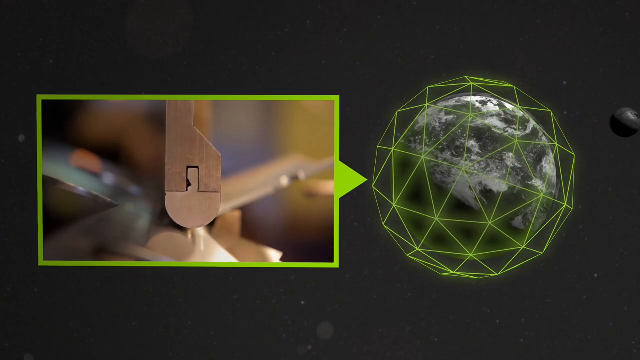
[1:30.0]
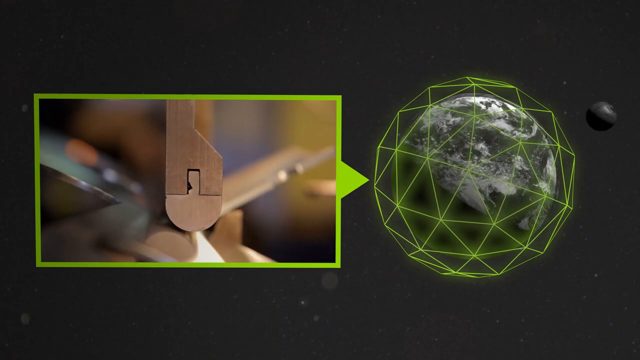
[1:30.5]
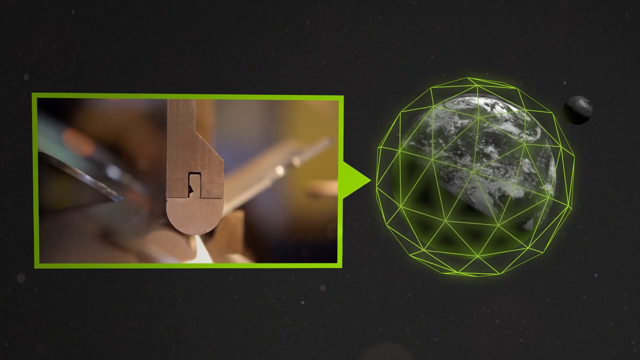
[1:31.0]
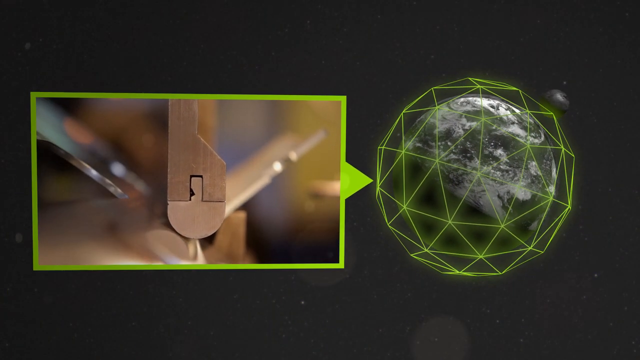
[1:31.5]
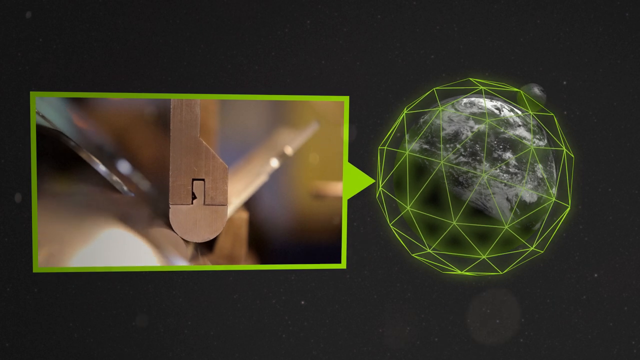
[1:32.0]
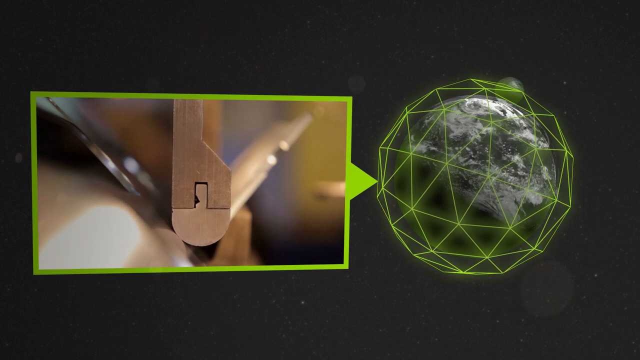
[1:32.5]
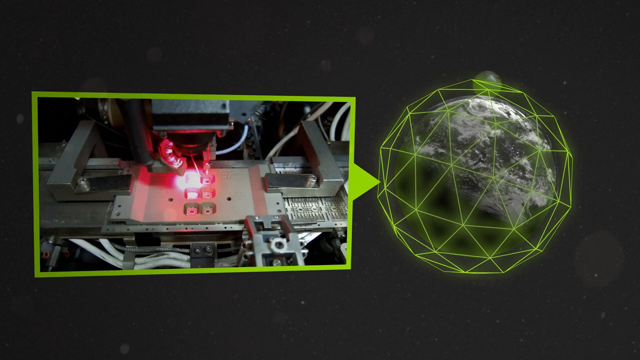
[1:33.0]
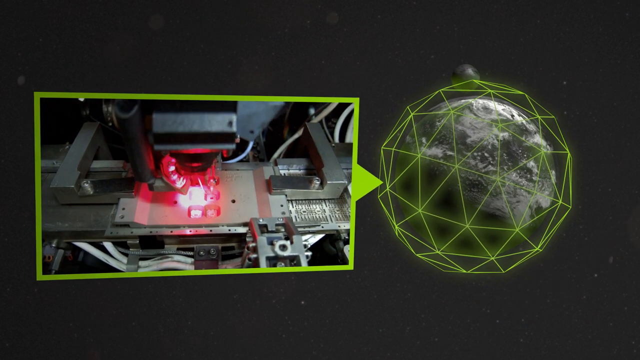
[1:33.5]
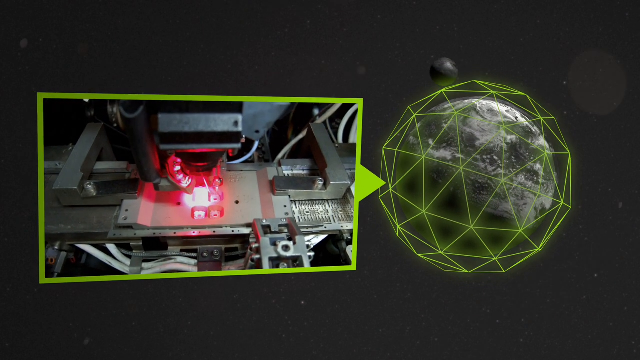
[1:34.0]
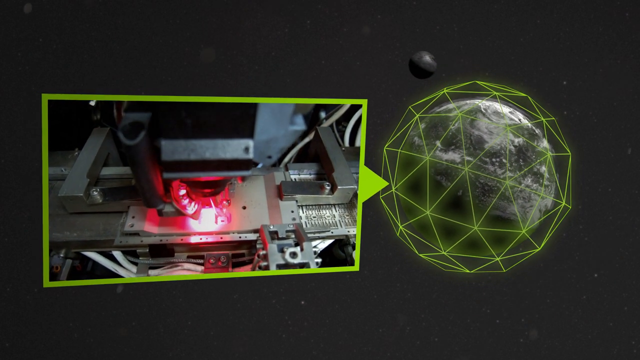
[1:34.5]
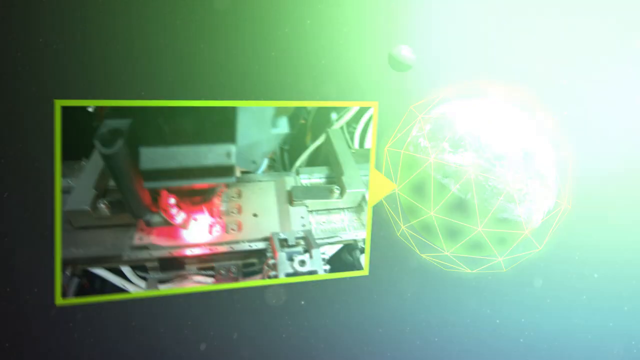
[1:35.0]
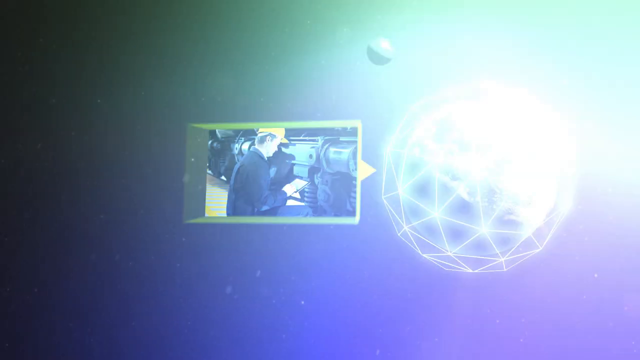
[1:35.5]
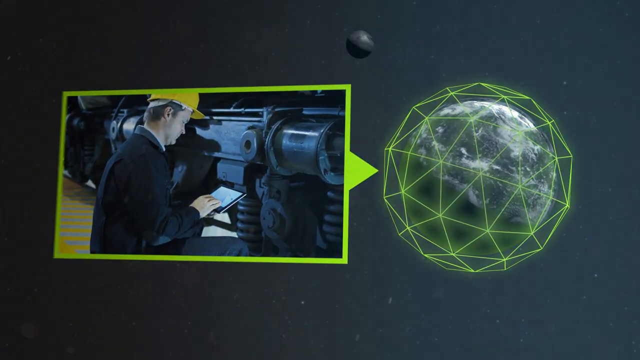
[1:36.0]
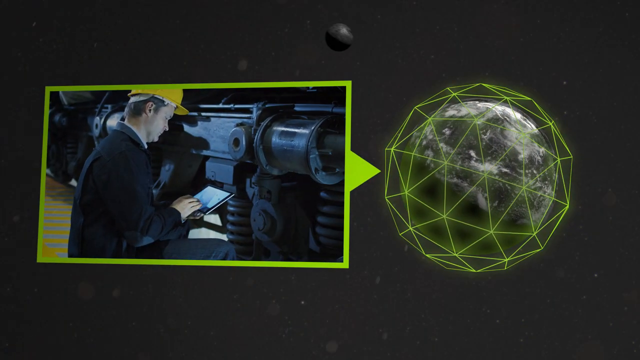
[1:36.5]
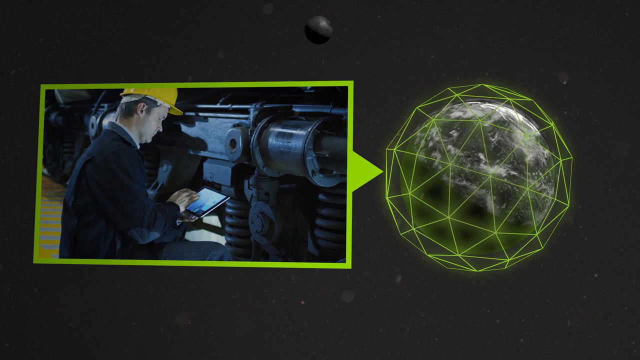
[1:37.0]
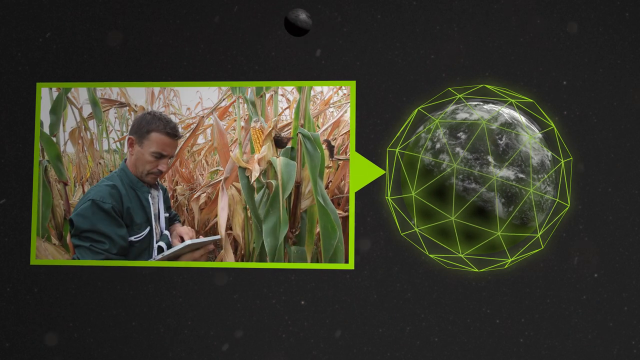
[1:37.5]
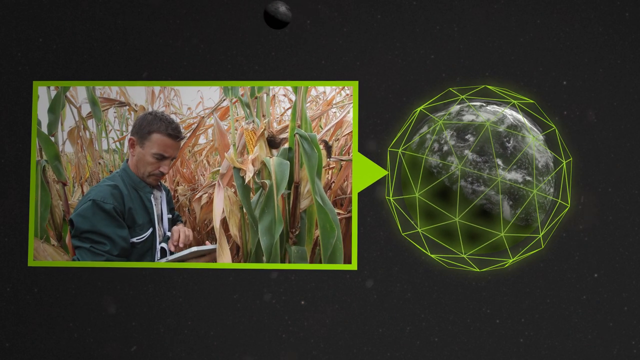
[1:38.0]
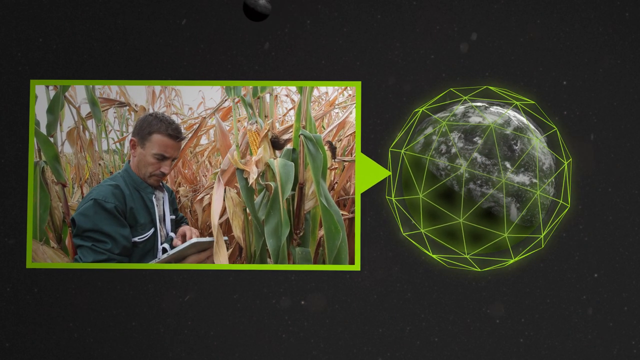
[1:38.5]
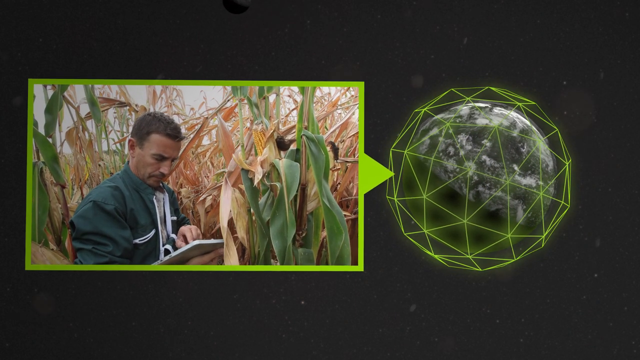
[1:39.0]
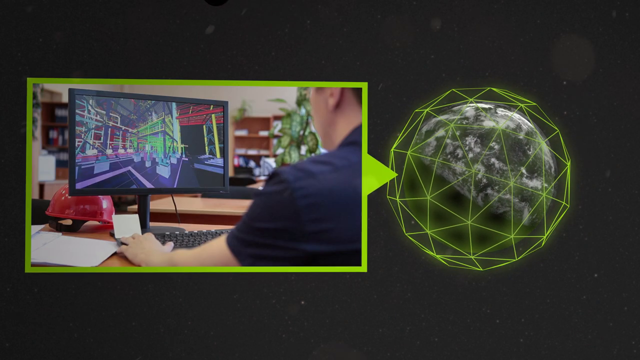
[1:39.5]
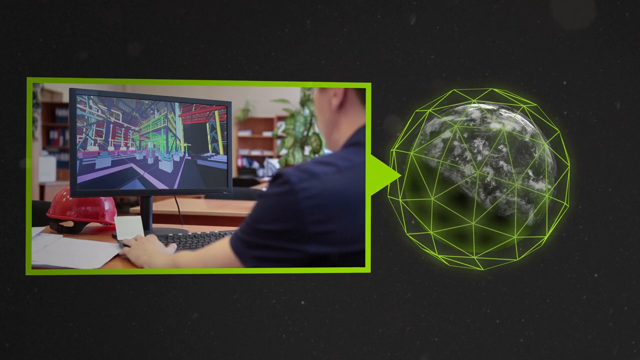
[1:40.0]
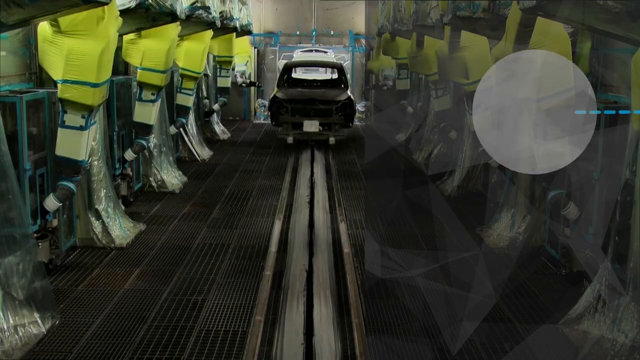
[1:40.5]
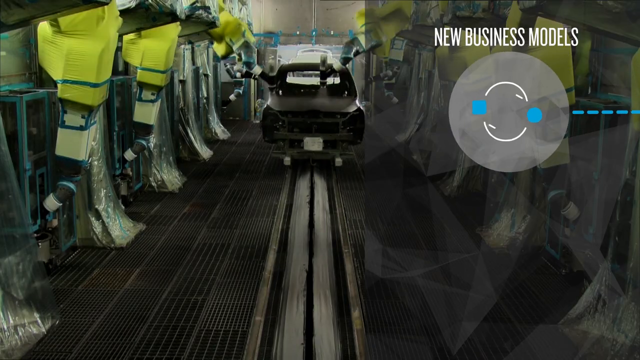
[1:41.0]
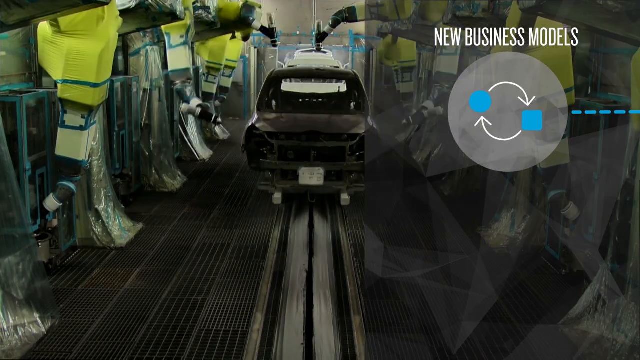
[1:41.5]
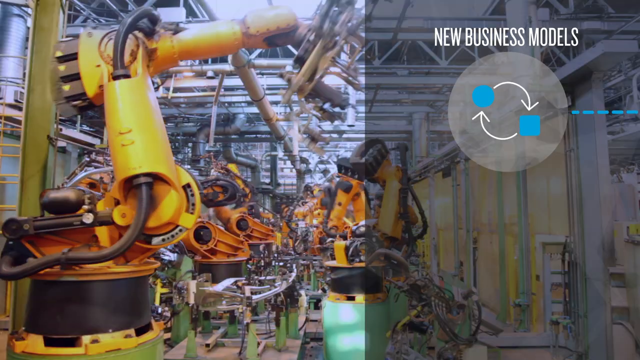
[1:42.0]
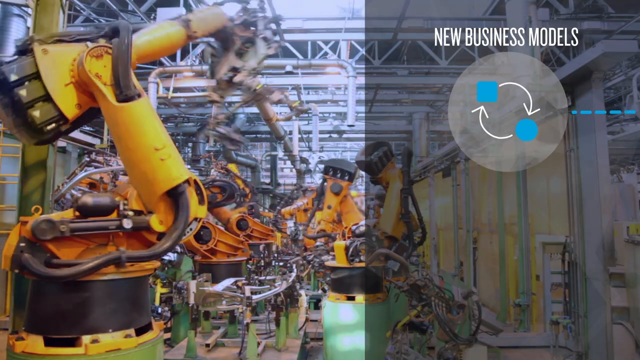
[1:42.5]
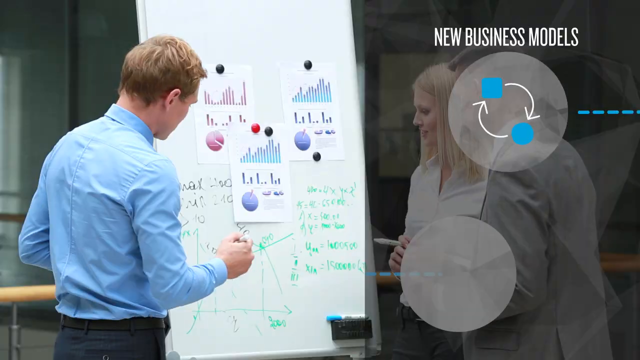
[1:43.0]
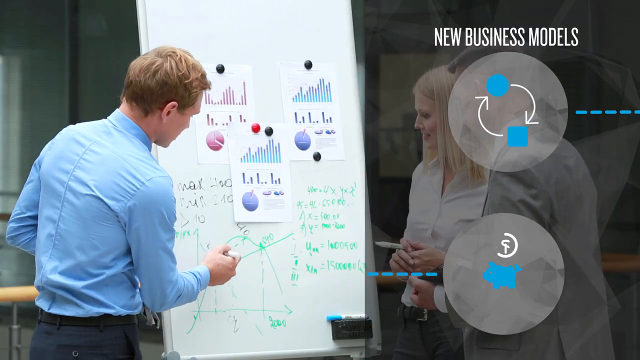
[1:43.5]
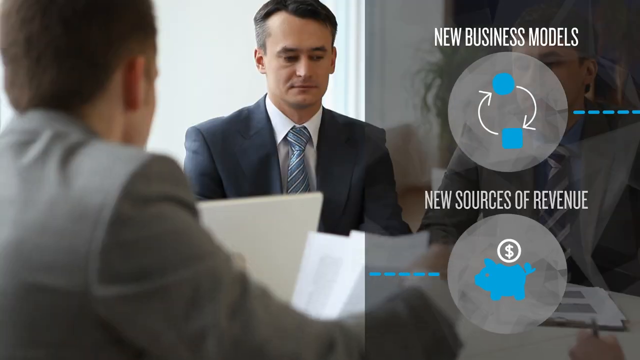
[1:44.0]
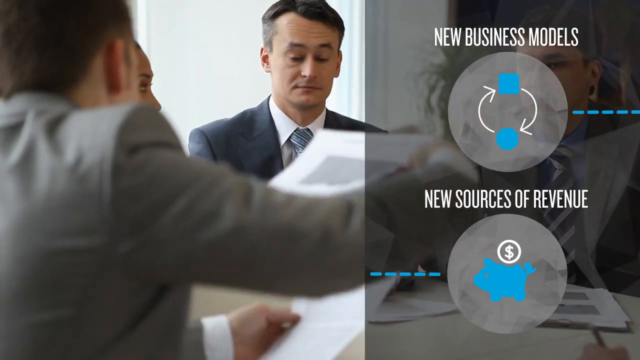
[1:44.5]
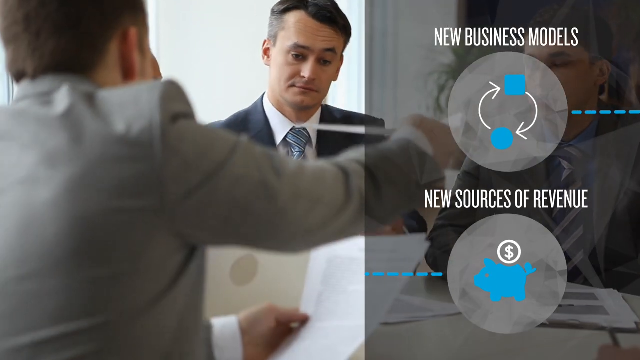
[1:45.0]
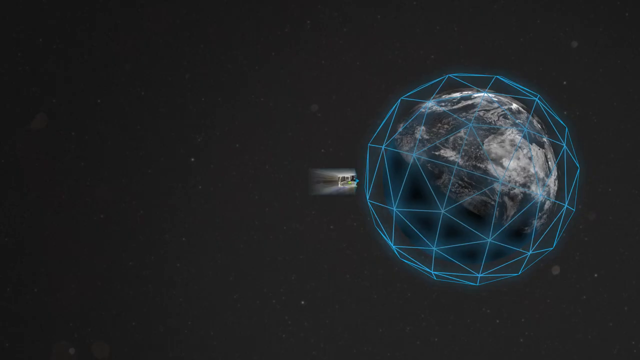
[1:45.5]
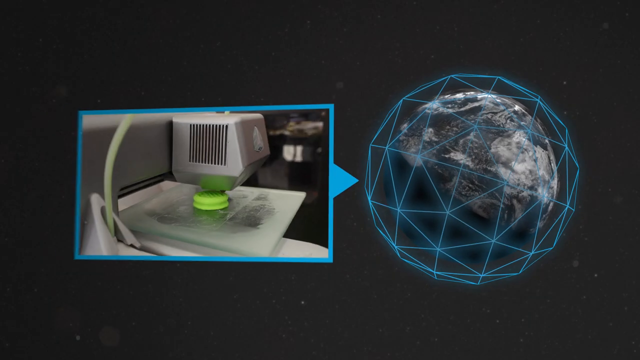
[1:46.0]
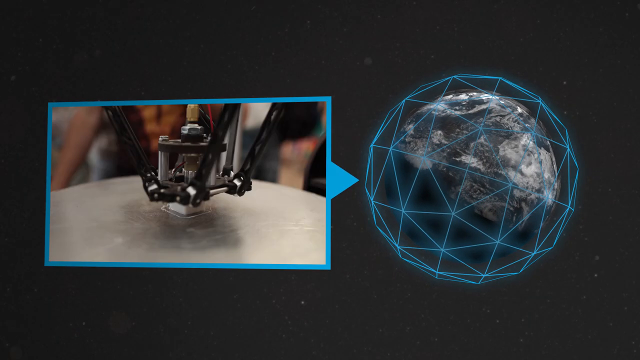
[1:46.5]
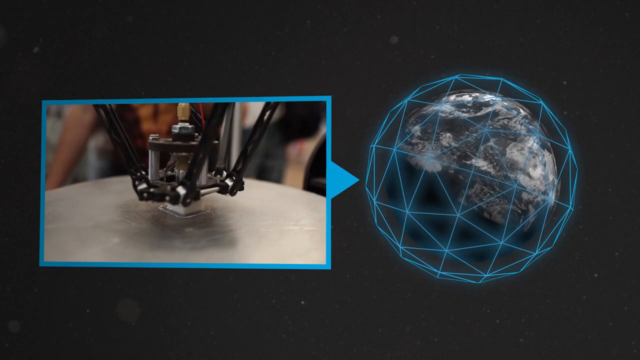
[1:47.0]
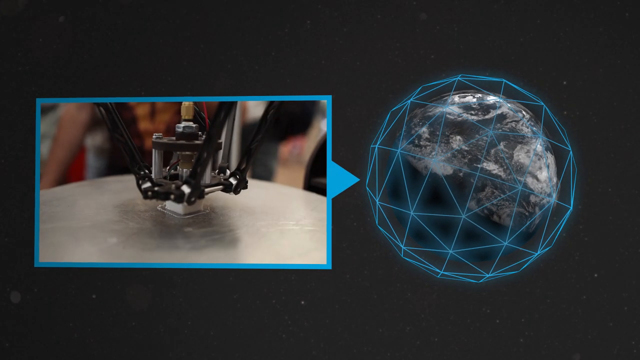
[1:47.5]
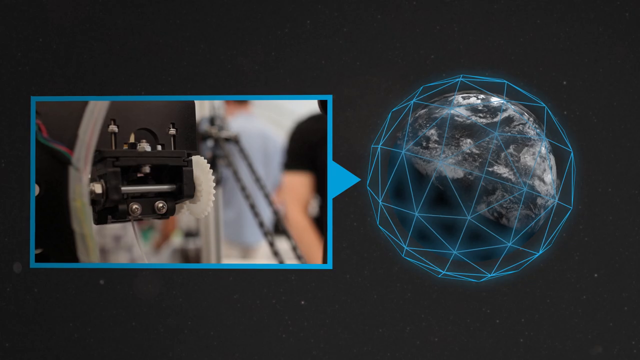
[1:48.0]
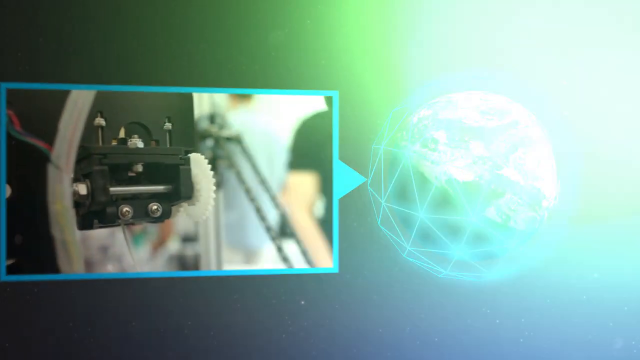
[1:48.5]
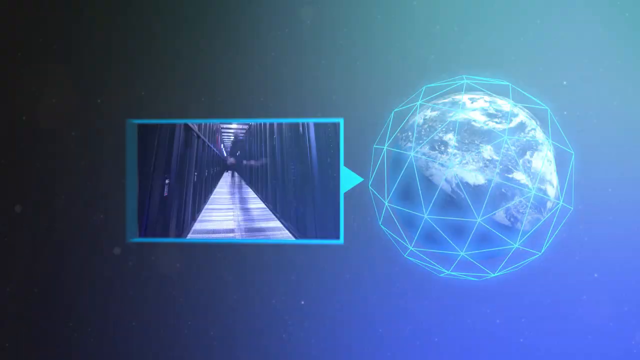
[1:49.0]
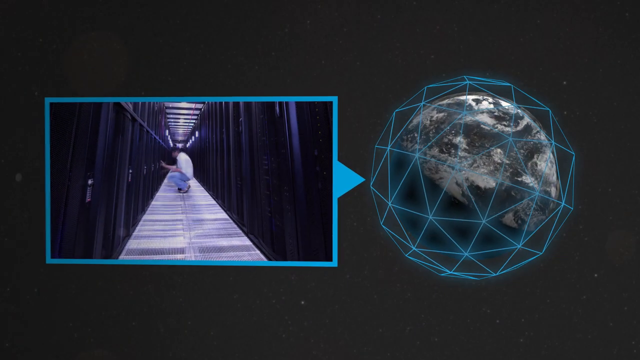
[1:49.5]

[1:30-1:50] A gray circle is on top of a black background with a light green cage over top of it. To the side is a green square with changing images, mostly of some type of machinery. The background turns to a bright color as the image changes. The images in the box go from people working on machinery to people standing in what appears to be a cornfield working on a tablet, then back to someone working on a computer, and then to different types of machinery: one working on a car, then machines moving parts. Images of people talking to one another pop up. The image then changes back to the gray circle, this time with a blue cage on top of it and a blue rectangle again showing different types of machinery working.